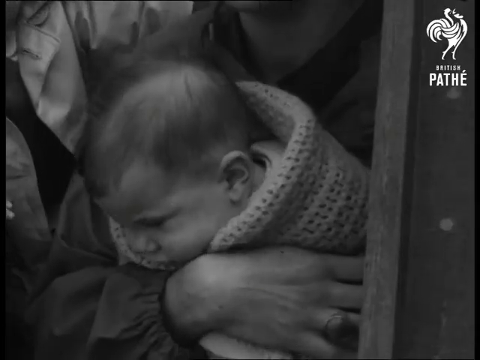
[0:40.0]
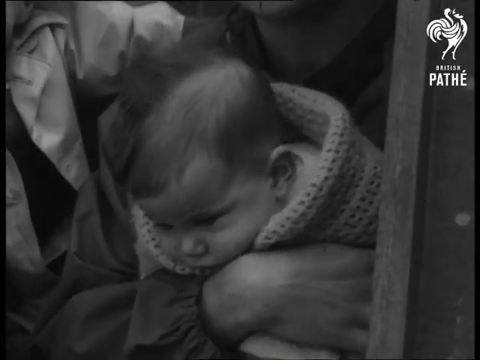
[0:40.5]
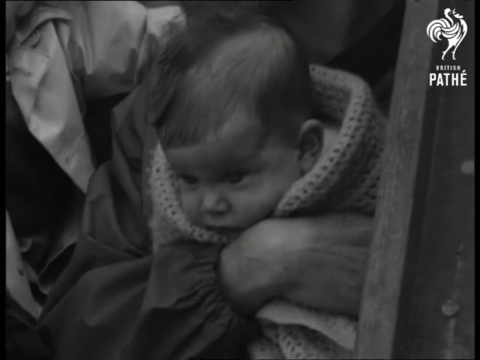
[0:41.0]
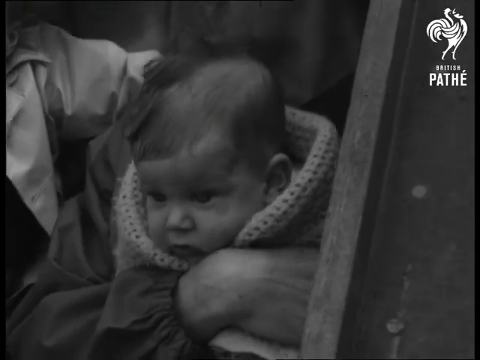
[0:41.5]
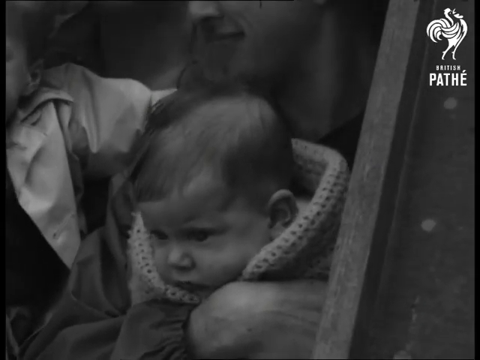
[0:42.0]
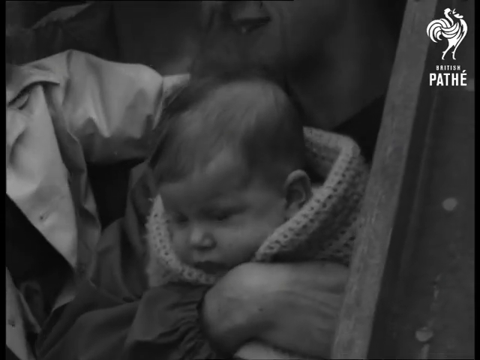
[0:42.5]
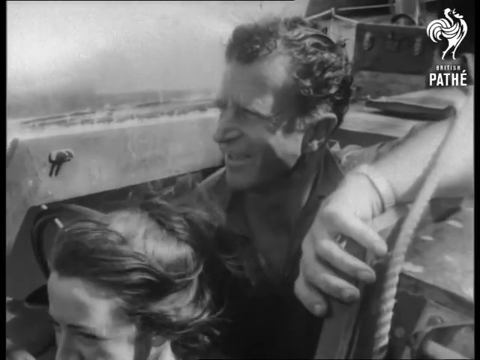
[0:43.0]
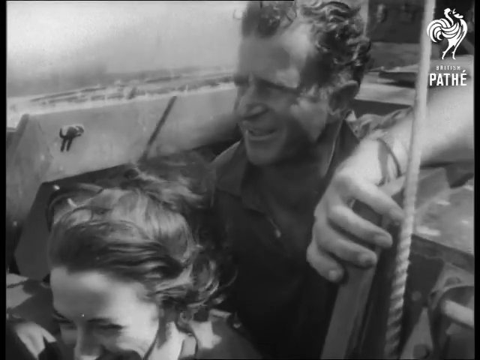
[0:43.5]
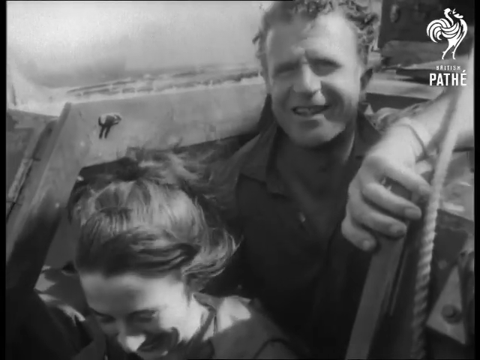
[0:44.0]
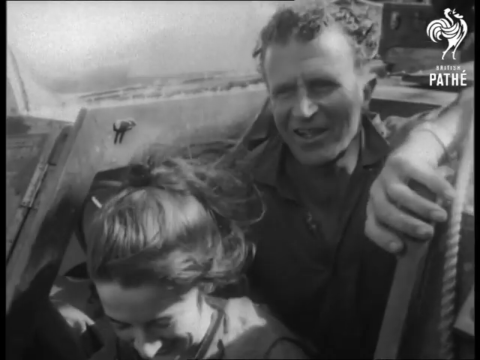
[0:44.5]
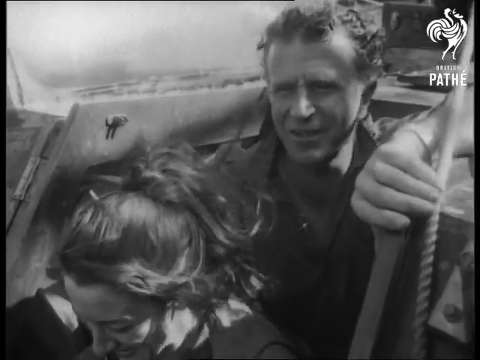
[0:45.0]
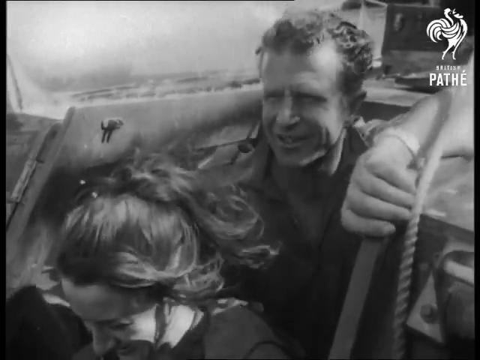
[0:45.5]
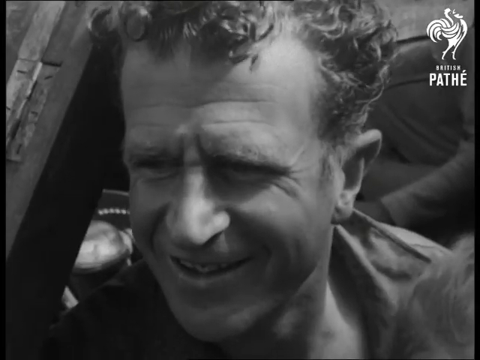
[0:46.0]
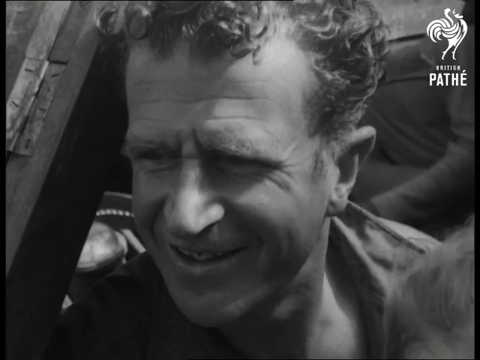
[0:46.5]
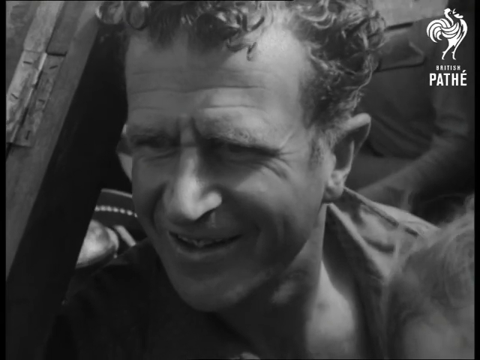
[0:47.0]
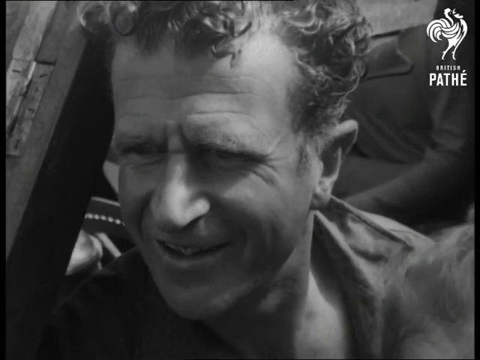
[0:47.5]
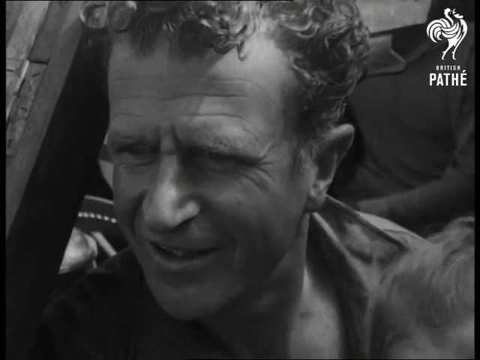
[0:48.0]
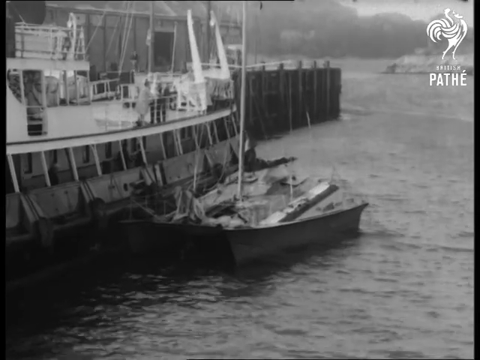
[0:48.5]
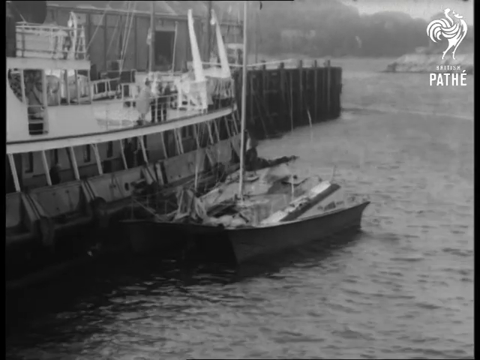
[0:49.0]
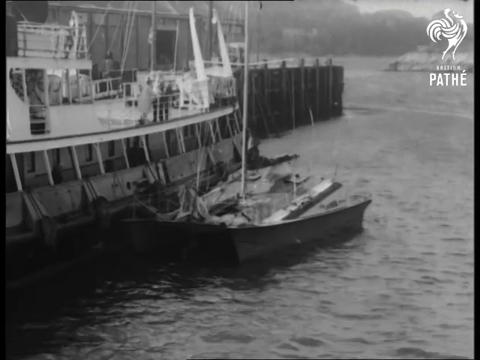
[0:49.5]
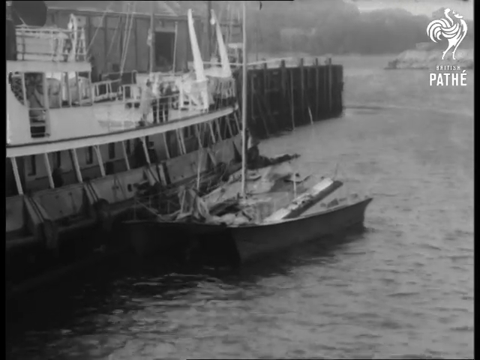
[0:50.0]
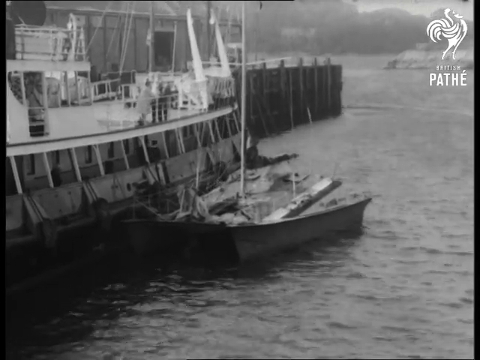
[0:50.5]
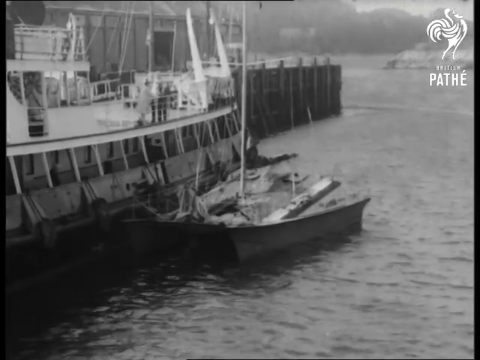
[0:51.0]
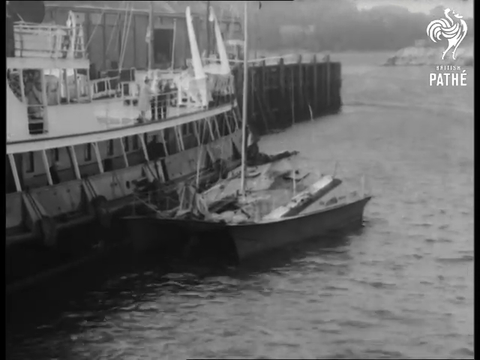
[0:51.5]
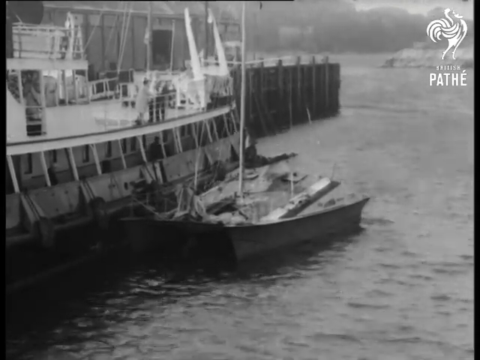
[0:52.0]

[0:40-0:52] In the black-and-white footage, the woman holds the child, a baby, as they look out from inside the vessel. The man, presumably the father, pokes his head out of the vessel's hole, standing behind the woman. His left hand grips the side of the opening. He has curly hair, and he talks, looks at the camera and grins, appearing happy. A boat is then shown docked next to another, much larger vessel.